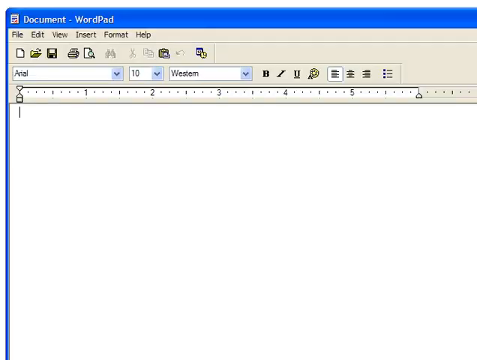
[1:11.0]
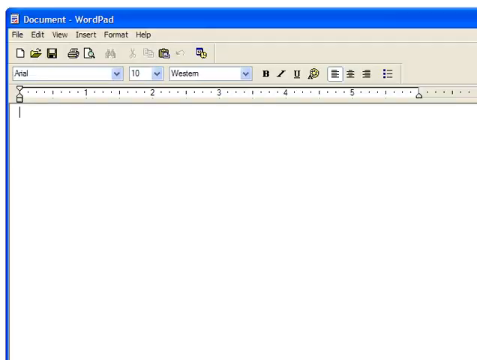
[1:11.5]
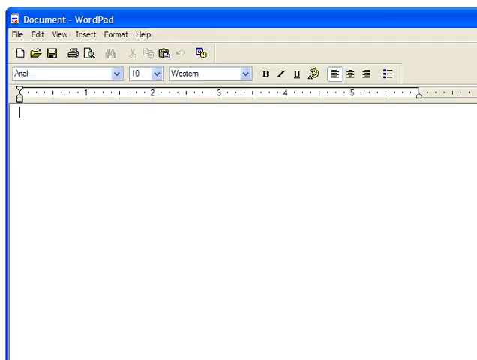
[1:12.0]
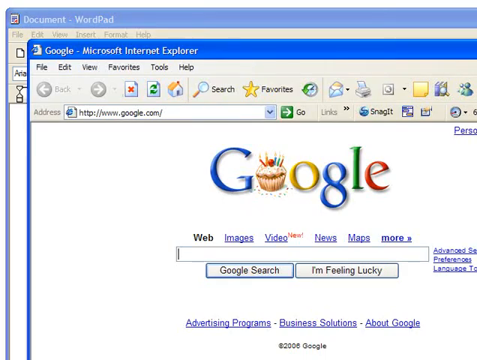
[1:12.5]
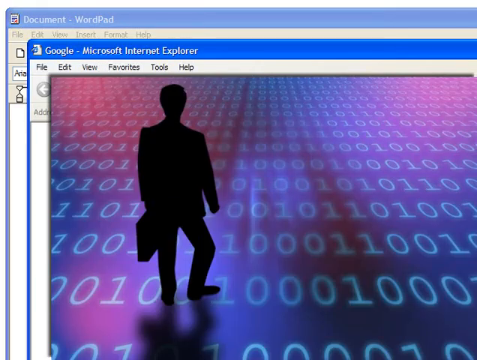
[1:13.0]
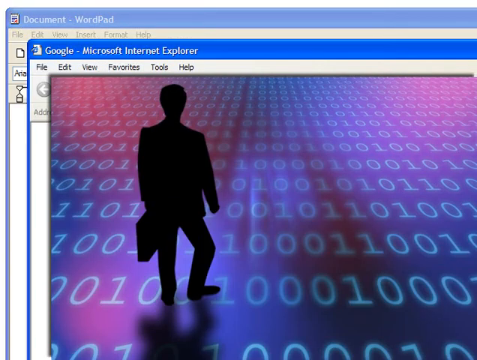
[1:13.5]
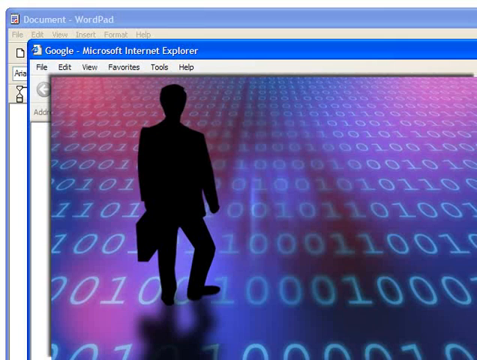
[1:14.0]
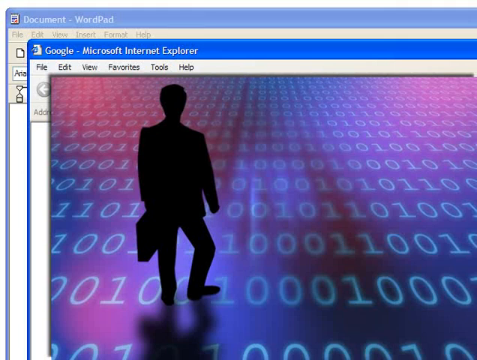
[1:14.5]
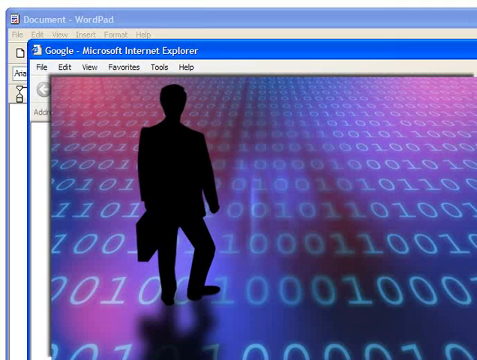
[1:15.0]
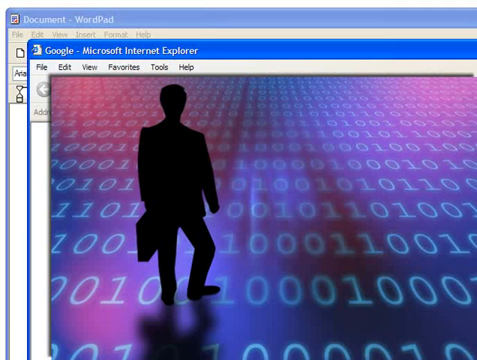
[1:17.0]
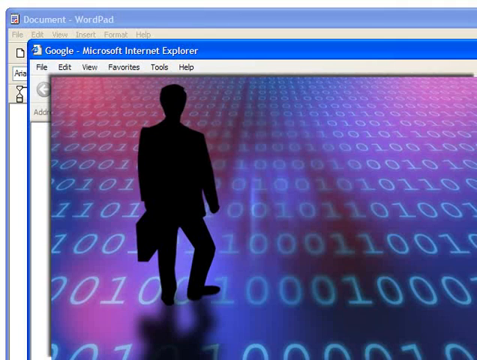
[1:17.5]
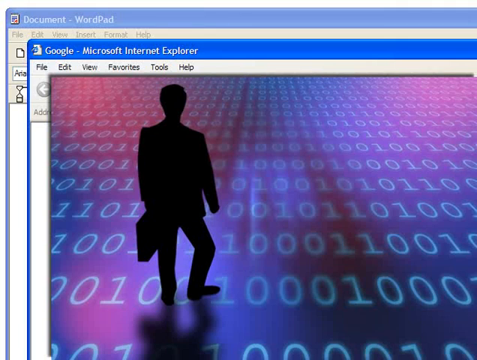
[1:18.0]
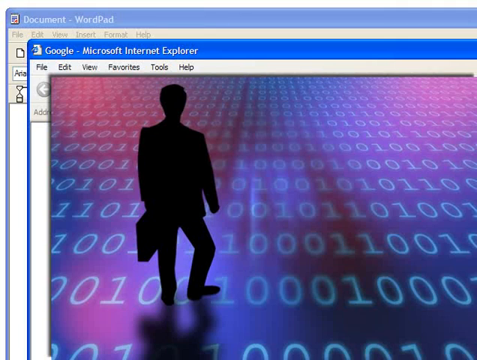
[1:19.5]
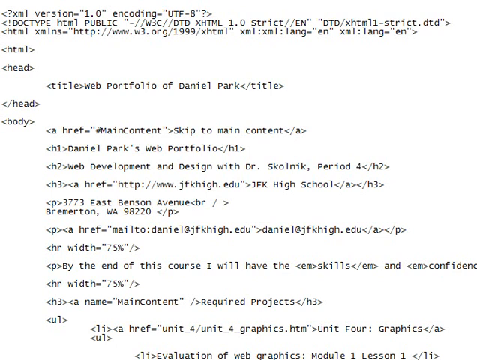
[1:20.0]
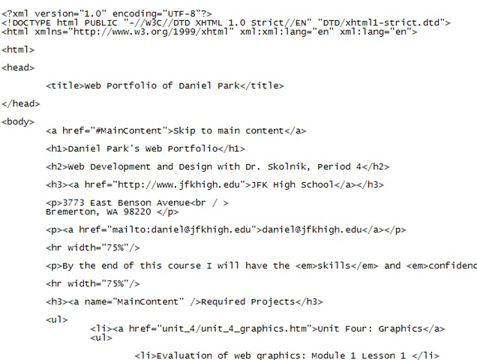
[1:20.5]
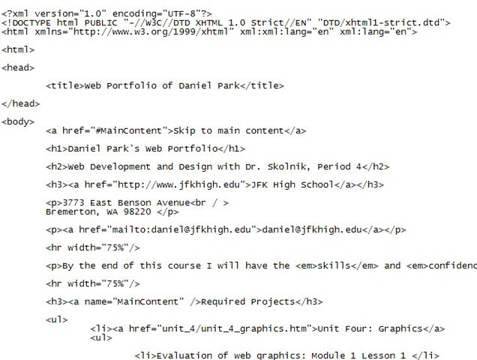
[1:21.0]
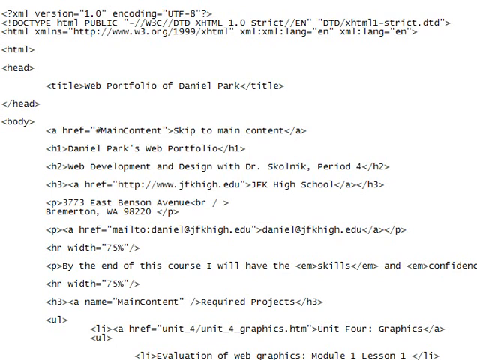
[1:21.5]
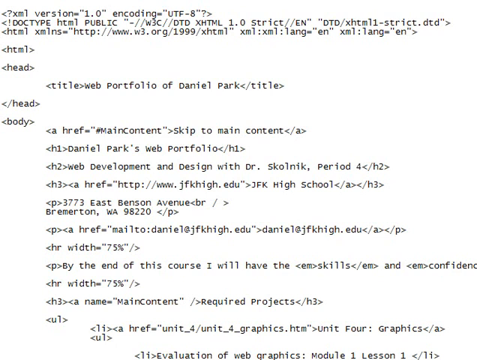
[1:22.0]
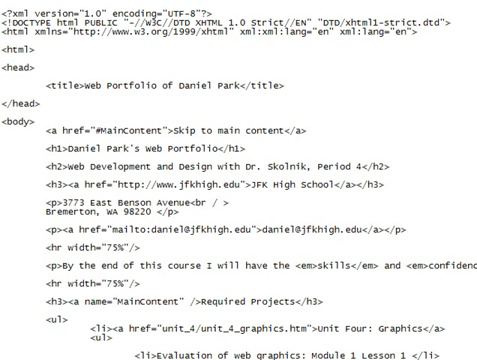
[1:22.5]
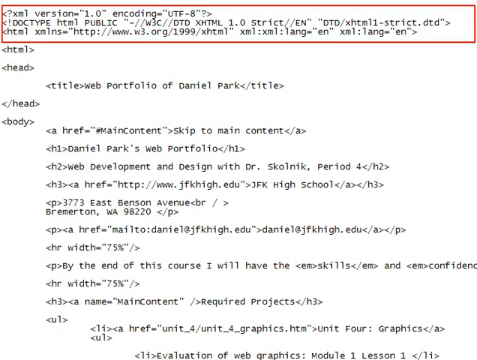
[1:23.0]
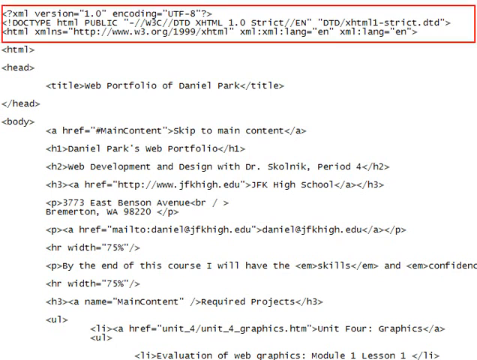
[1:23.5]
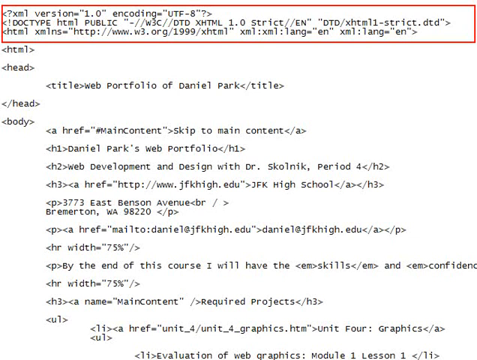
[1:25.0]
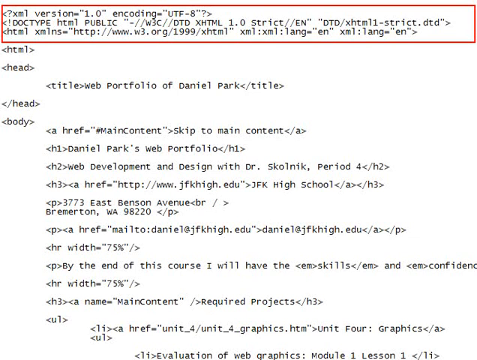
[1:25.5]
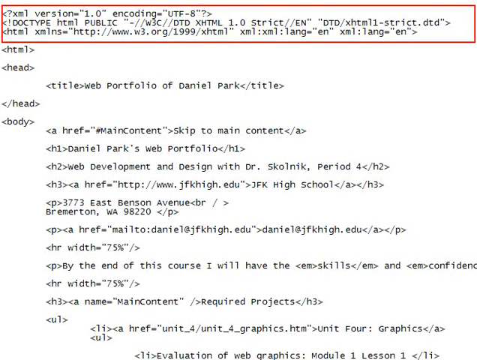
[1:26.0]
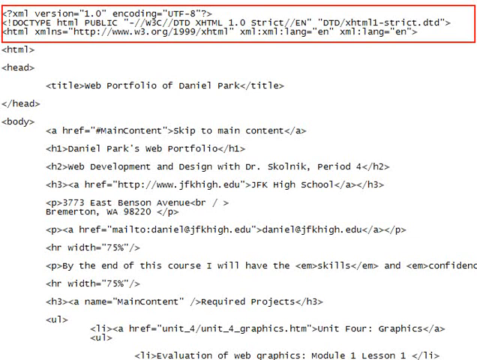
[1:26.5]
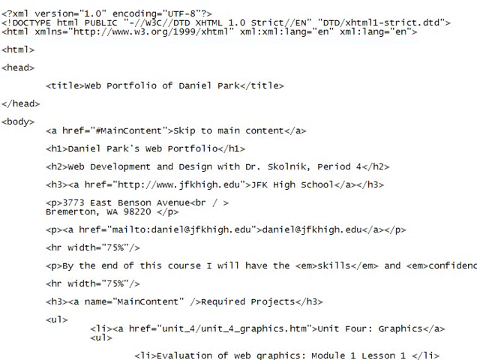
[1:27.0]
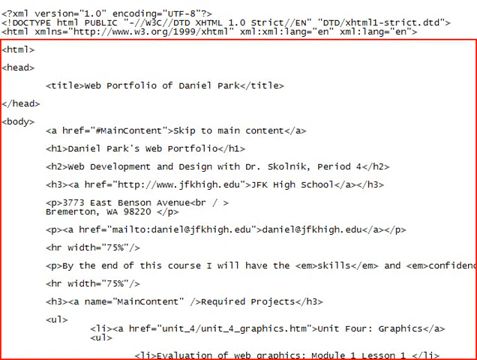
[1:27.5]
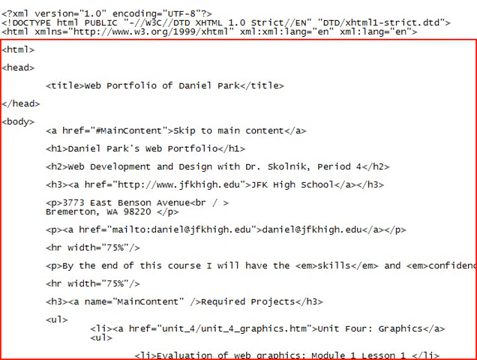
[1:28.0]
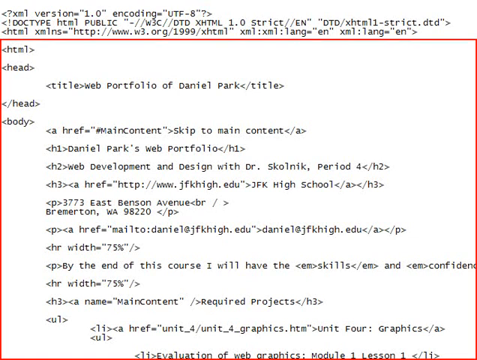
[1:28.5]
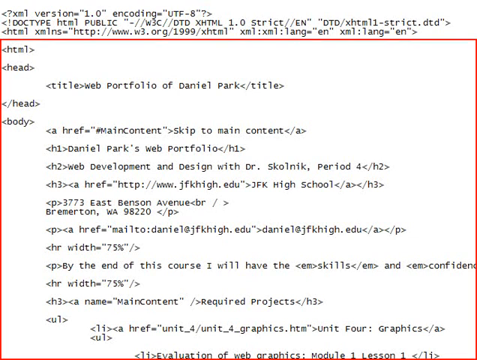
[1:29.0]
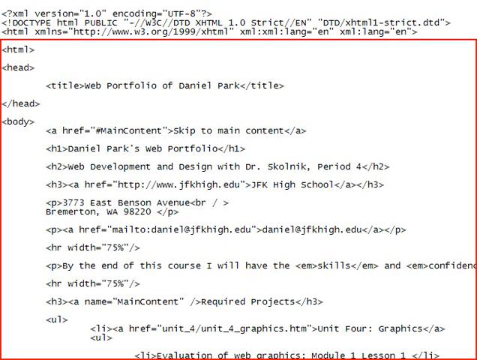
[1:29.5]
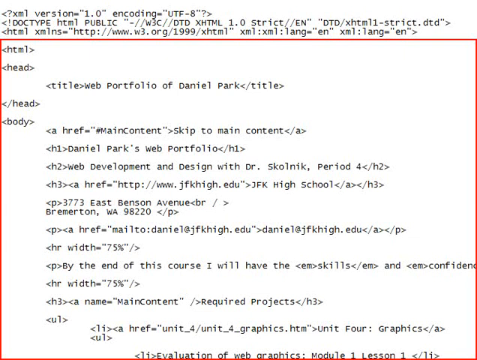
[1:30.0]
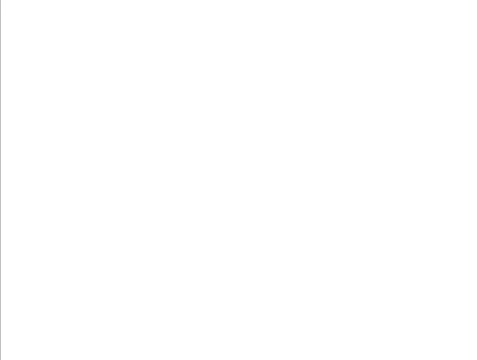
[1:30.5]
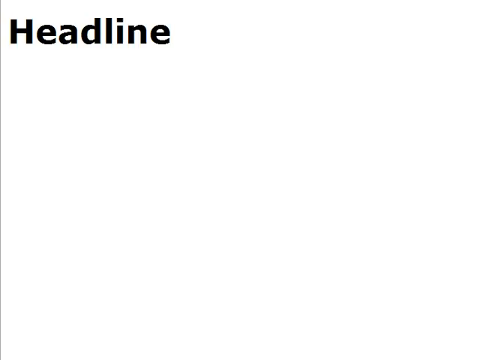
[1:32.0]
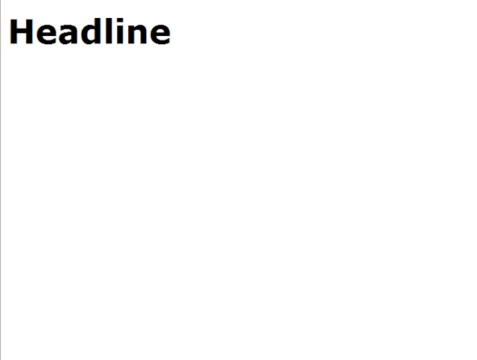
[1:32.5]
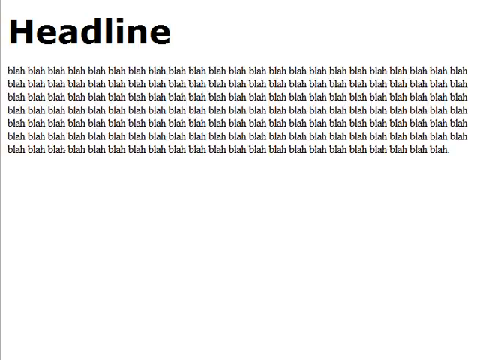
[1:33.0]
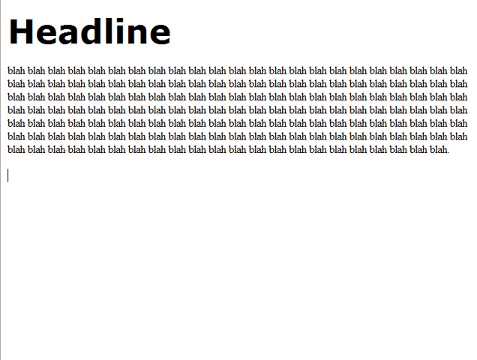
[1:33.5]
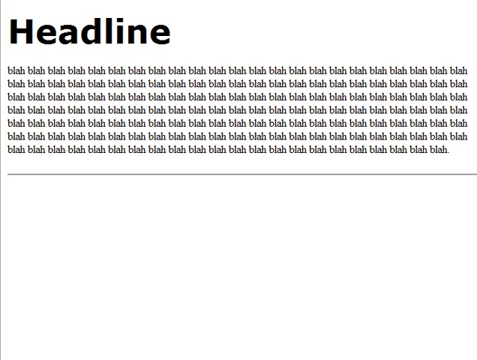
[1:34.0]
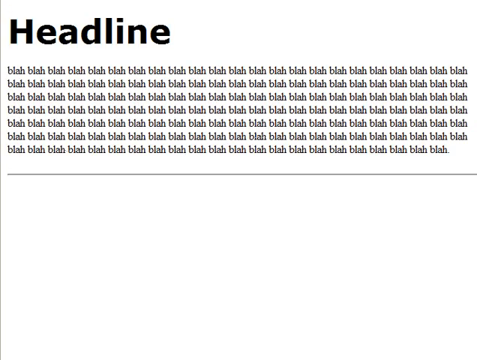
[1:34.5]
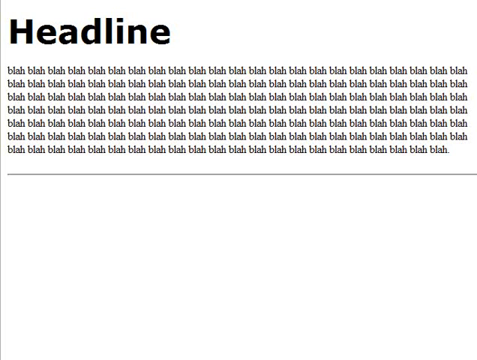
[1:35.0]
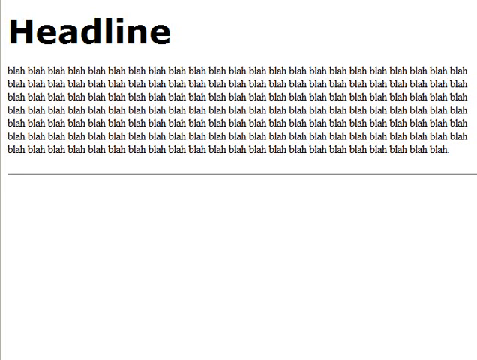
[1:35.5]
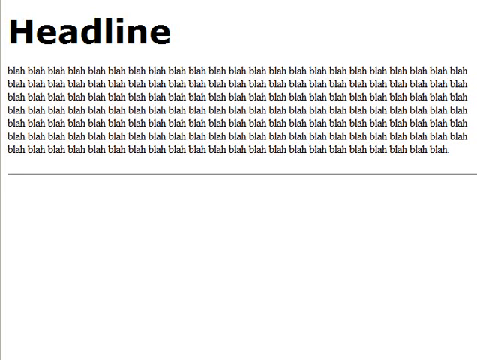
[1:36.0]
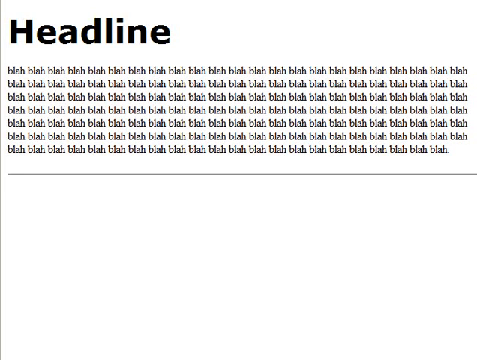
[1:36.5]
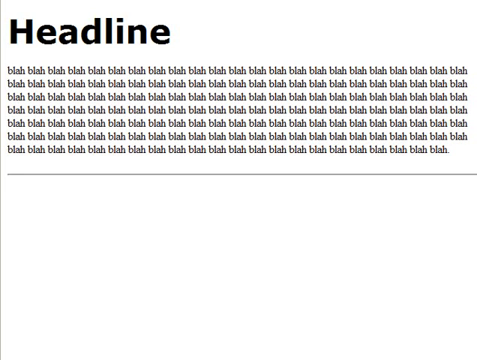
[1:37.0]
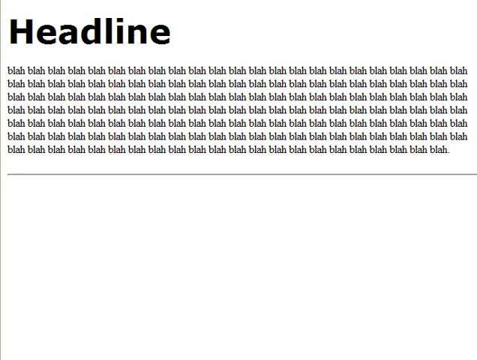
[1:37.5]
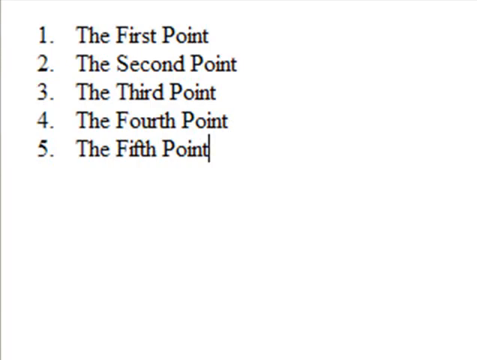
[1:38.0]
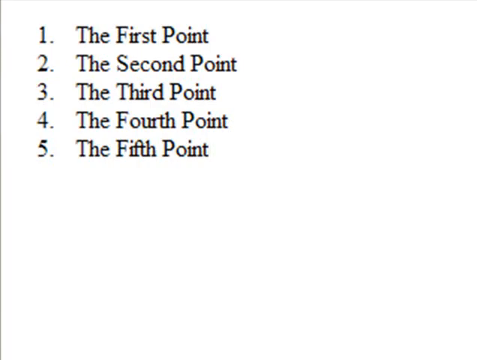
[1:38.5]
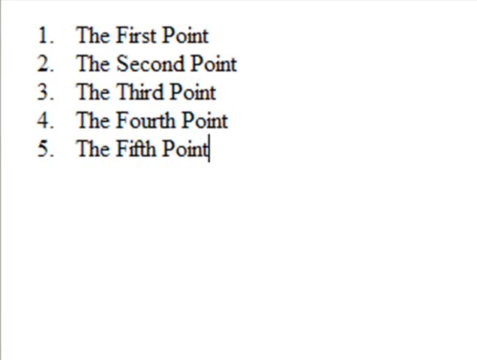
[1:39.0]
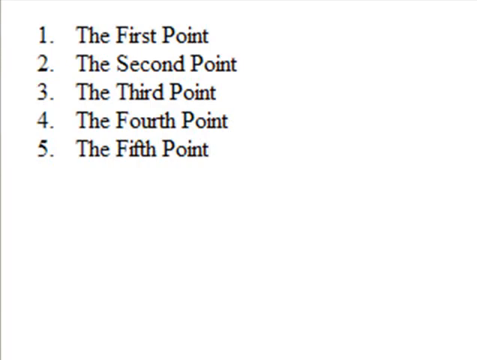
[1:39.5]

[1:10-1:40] A document is open in WordPad, and someone seems about to type something; then Microsoft Internet Explorer is opened. Another pop-up appears showing a black shadow figure with many numbers, lots of ones and zeros, at his feet on the floor. Next is a code page with "head", "body" and "title" and the text "Web portfolio of Daniel Park", along with a lot of code. Then a blank page fills with text reading "blah blah blah" repeatedly. Just before the shot ends, a list numbered 1 through 5 reads "the first point", "the second point", "third point", "the fourth point" and "the fifth point."